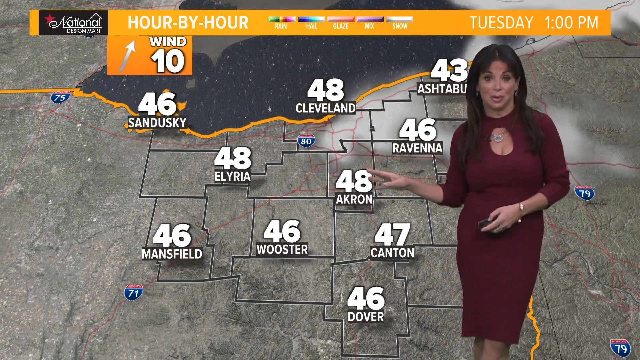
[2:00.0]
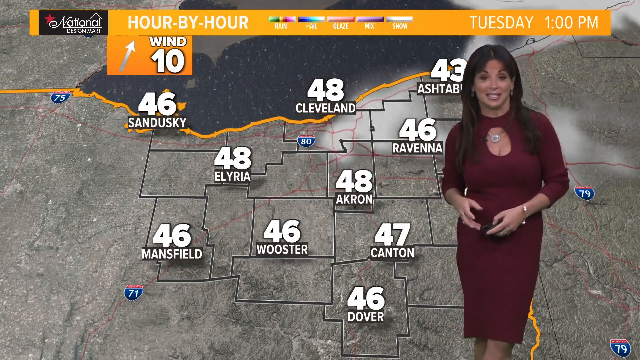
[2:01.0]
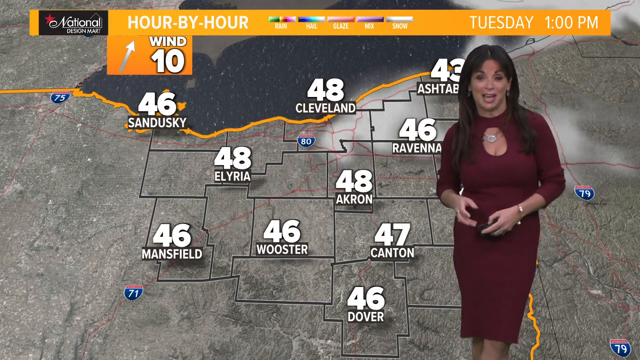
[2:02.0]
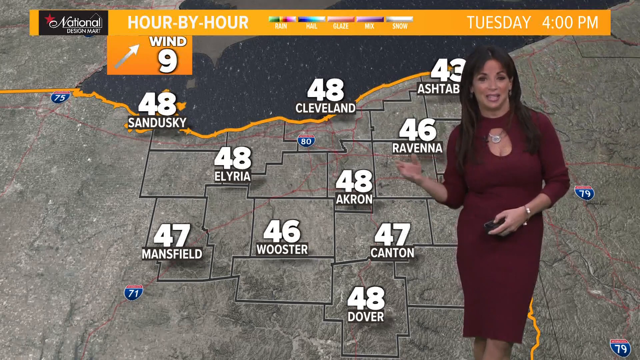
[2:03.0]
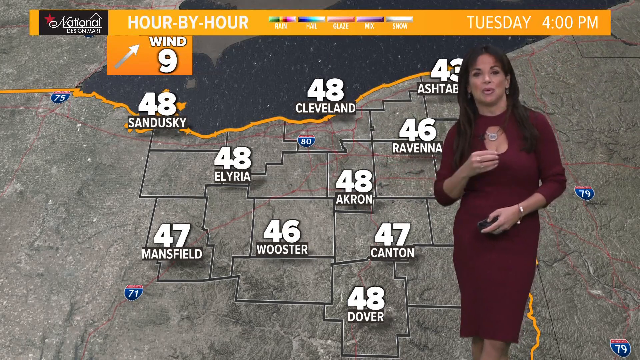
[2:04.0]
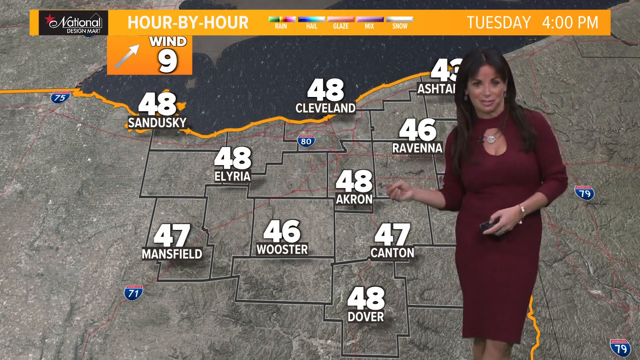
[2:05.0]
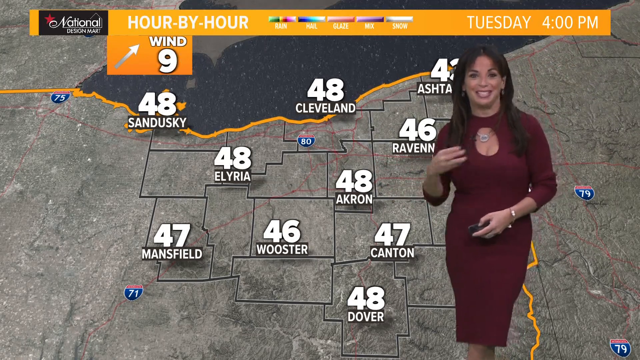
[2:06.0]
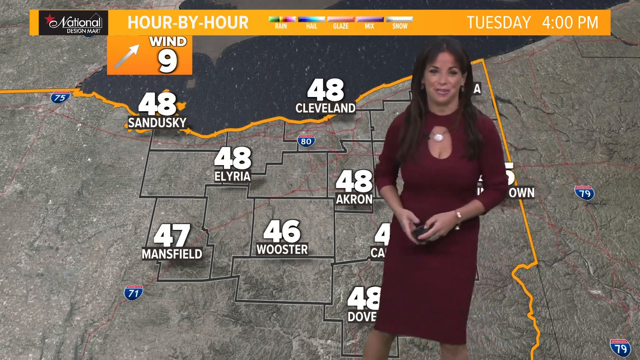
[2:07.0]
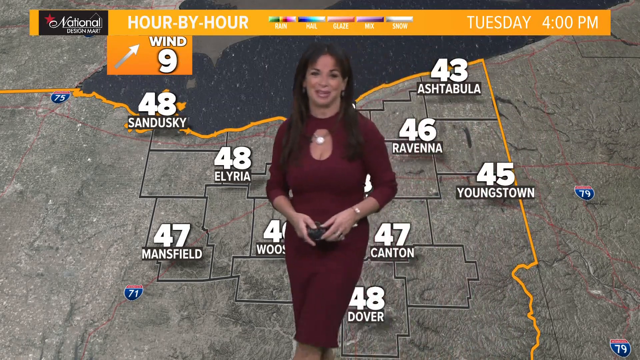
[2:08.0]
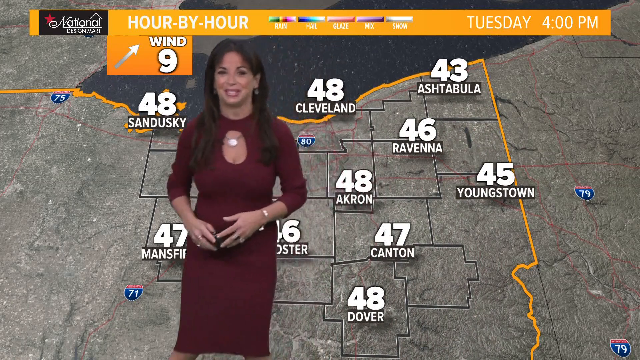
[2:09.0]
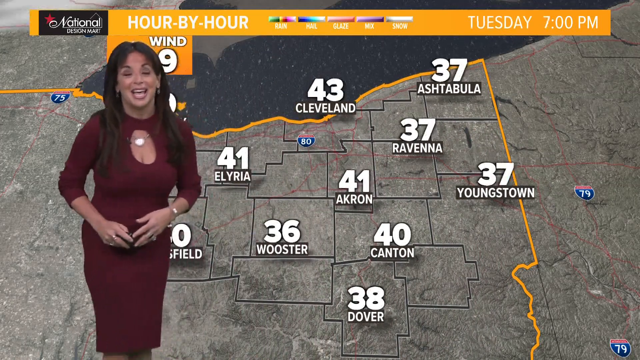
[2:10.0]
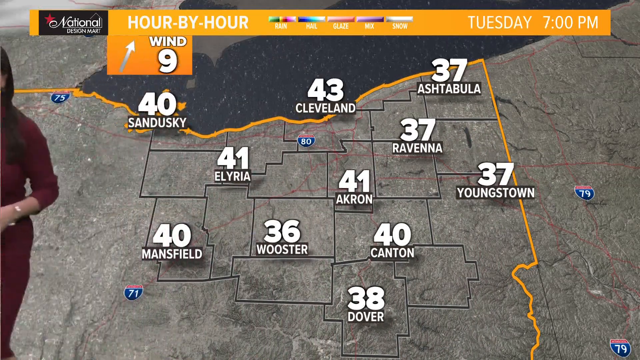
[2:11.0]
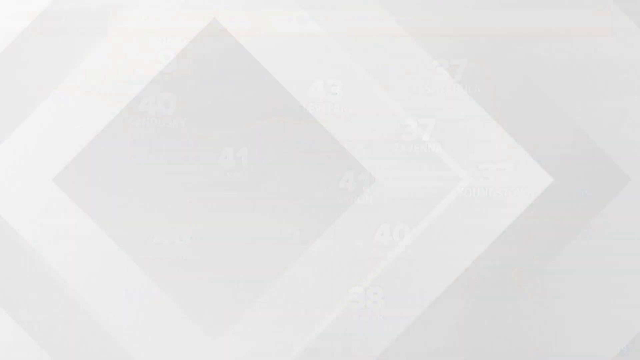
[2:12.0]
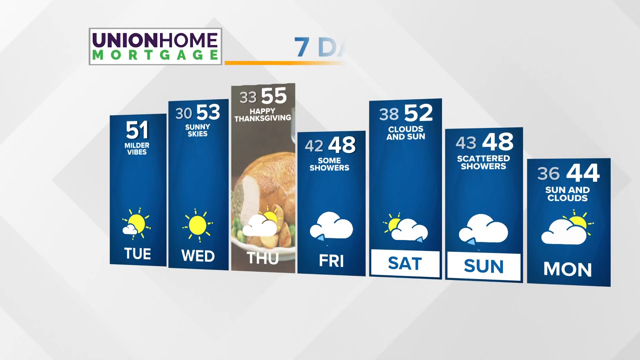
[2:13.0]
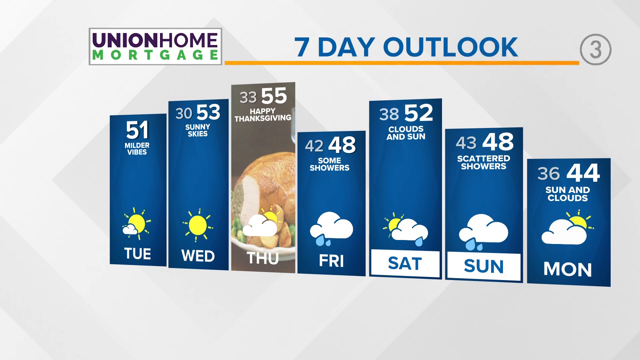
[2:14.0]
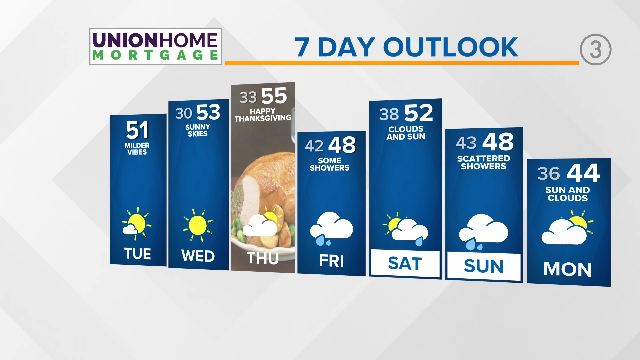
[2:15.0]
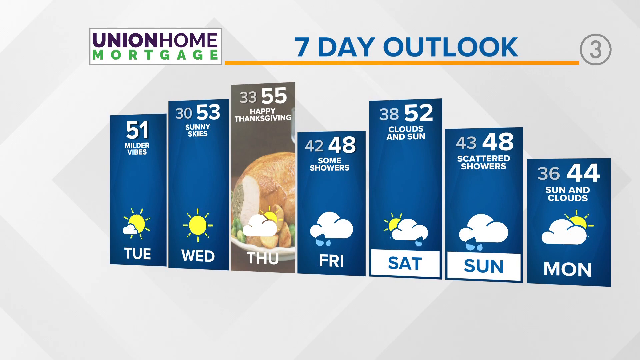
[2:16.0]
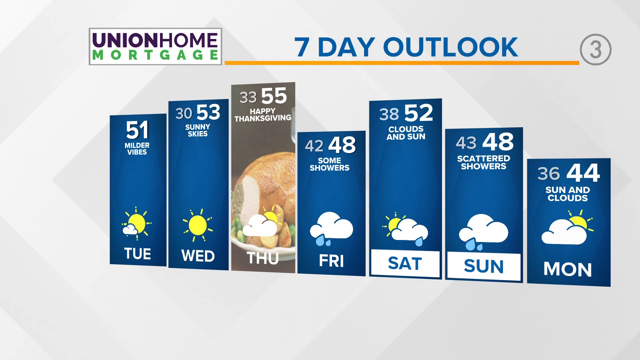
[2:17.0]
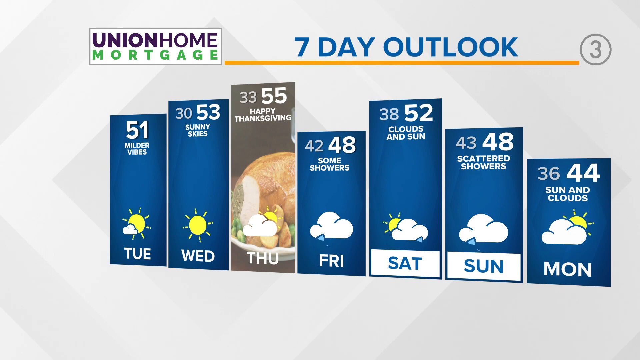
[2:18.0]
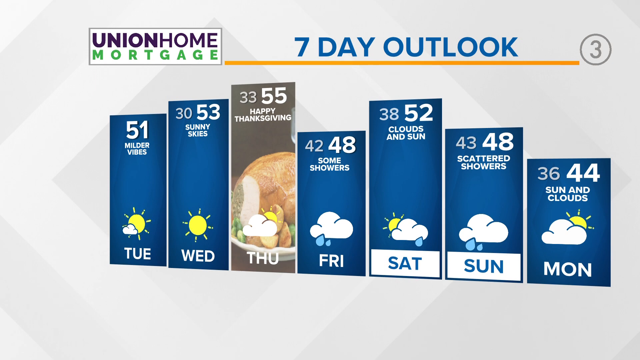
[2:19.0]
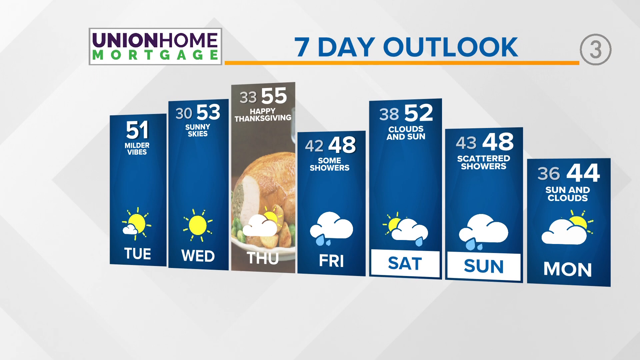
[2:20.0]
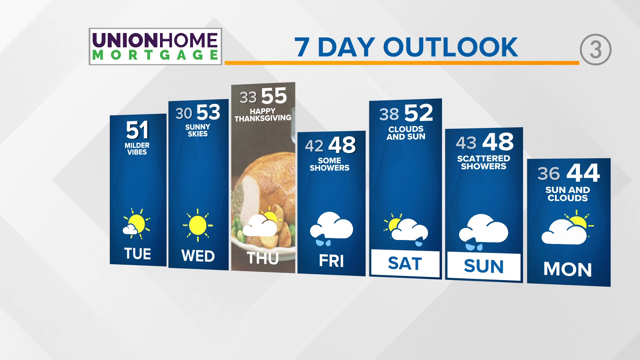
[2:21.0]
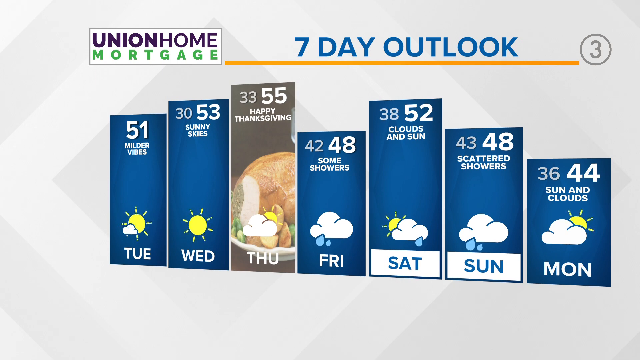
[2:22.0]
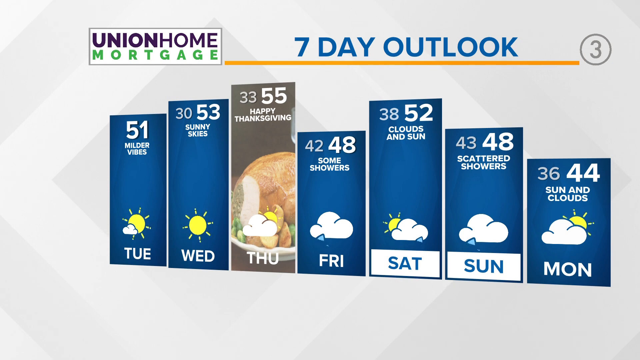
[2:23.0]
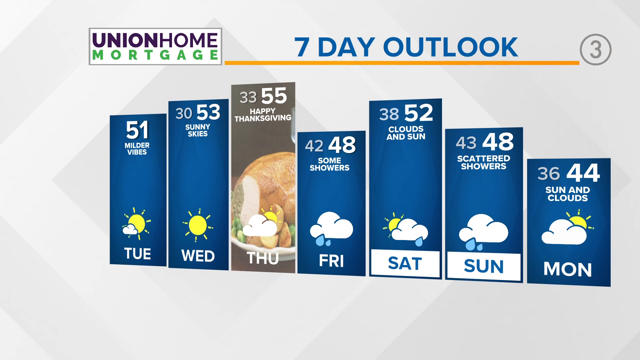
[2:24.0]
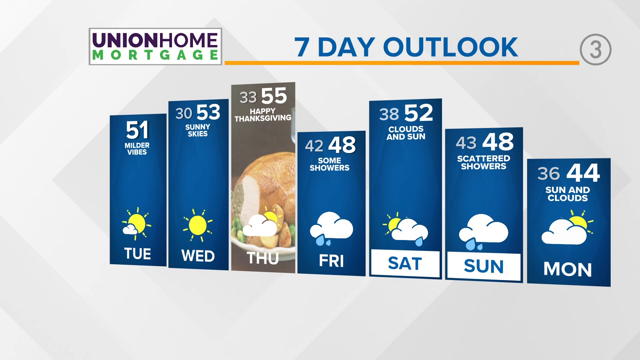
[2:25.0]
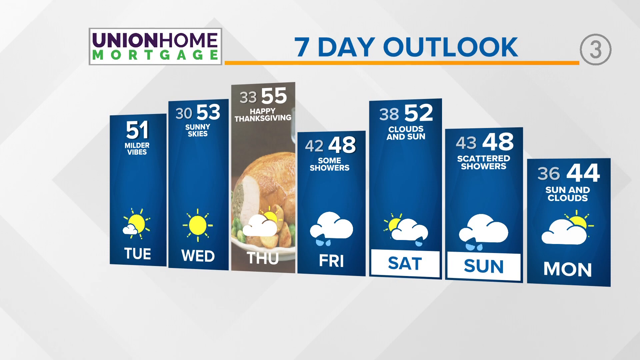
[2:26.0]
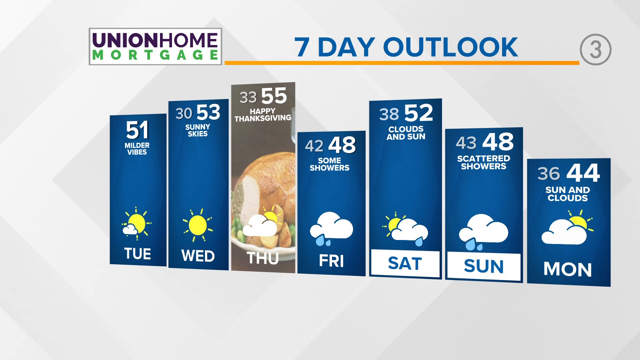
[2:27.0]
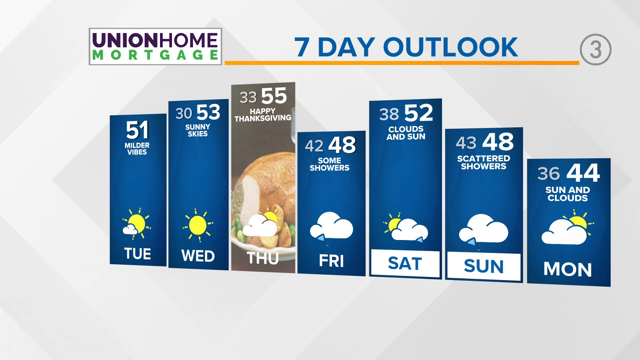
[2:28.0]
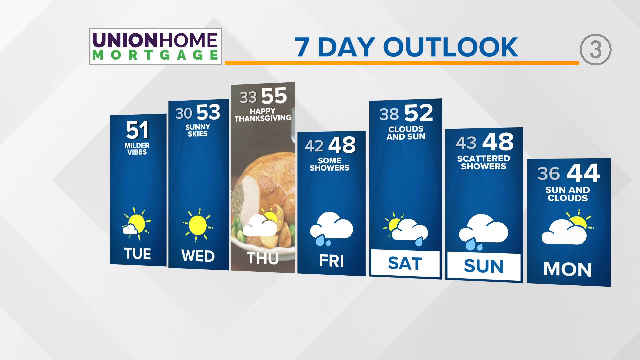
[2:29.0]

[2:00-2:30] The weather reporter for the news station appears on the right of the screen, gesturing with her right hand toward the graphic behind her, a map of various cities with the temperature listed above each city name. An orange banner above her reads "hour by hour," followed by a color-coded bar with the categories rain, hail, glaze, mix and snow. The woman moves to the left of the screen and completely off the screen. Another graphic pops up, titled "Seven Day Outlook": a bar graph of temperatures for the days of the week, starting on Tuesday and ending on Monday, with an advertising banner reading "Union Home Mortgage." Each bar includes a temperature and the day of the week. Thursday's bar has an image meant for Thanksgiving, with "happy Thanksgiving" below the temperature and a picture of a turkey in the background; it shows a low of 33 and a high of 55, and the day is abbreviated "THU" at the bottom.